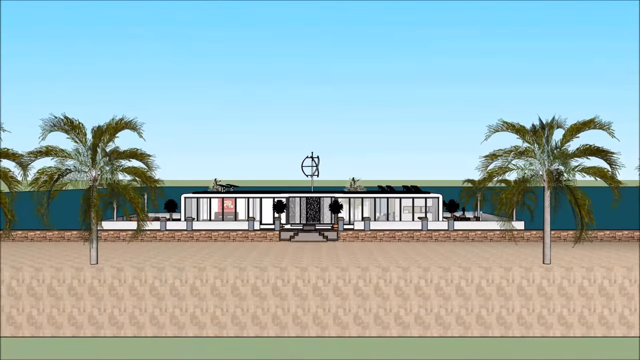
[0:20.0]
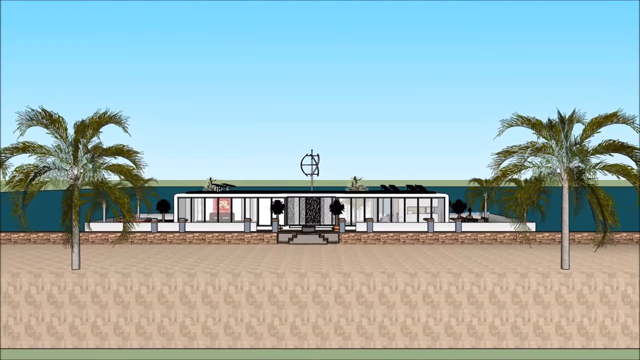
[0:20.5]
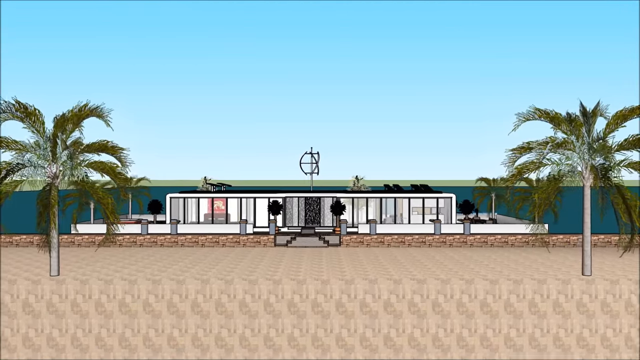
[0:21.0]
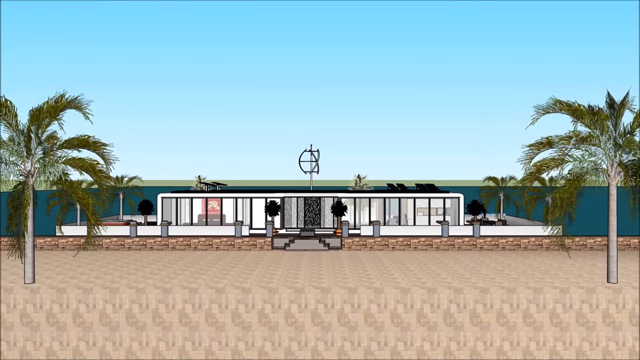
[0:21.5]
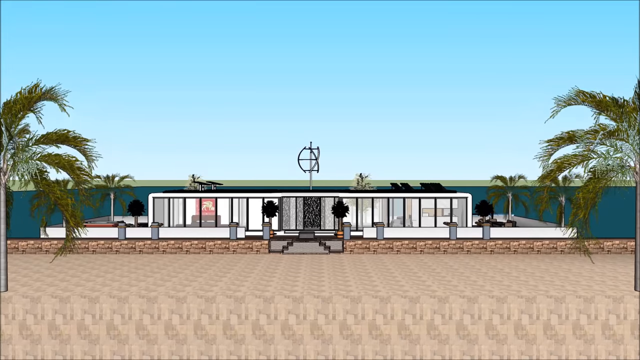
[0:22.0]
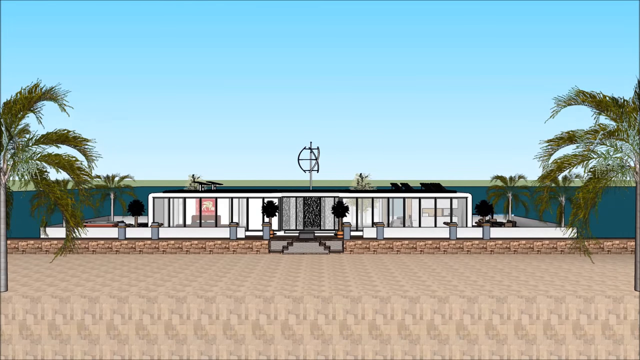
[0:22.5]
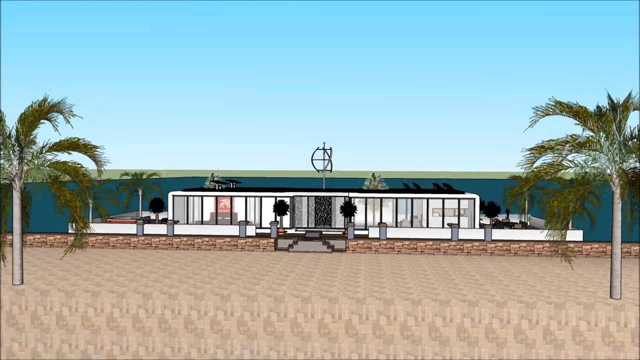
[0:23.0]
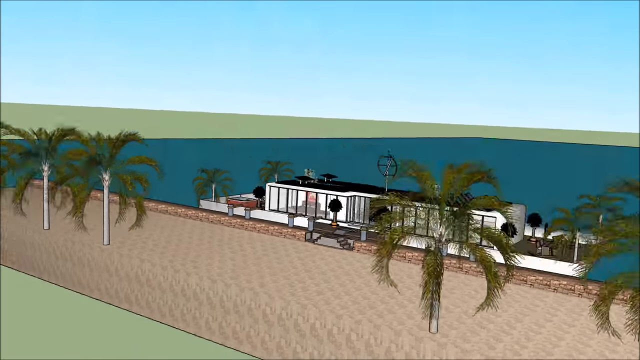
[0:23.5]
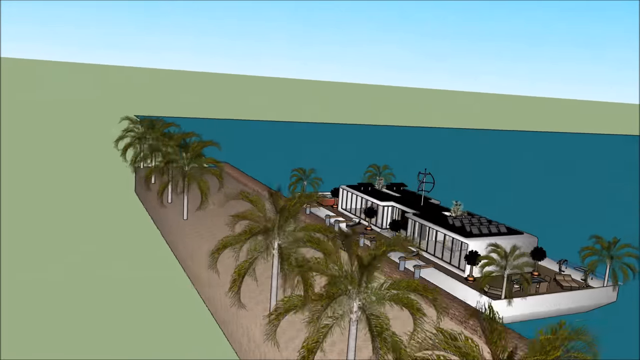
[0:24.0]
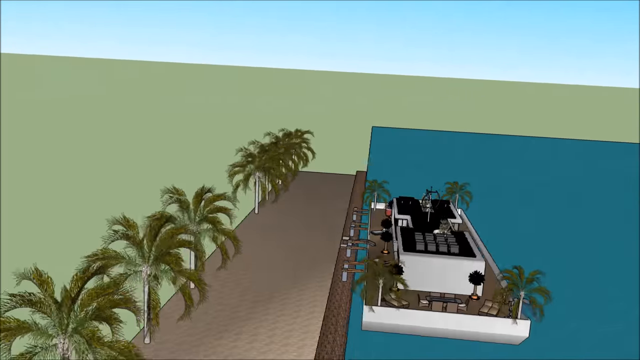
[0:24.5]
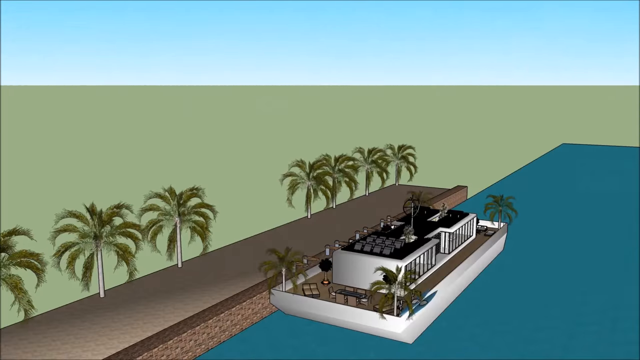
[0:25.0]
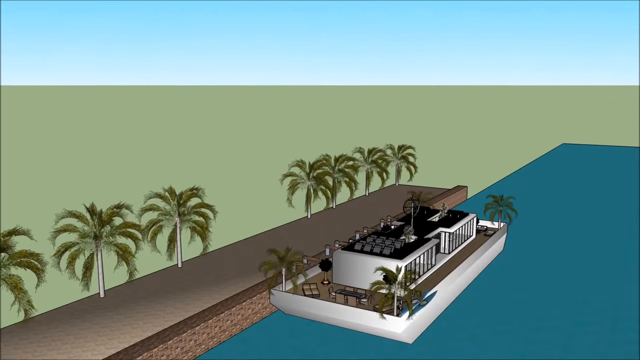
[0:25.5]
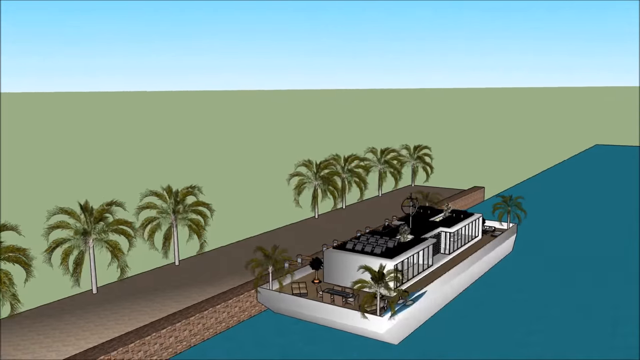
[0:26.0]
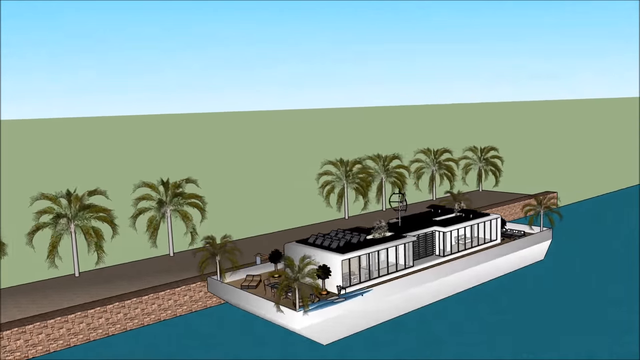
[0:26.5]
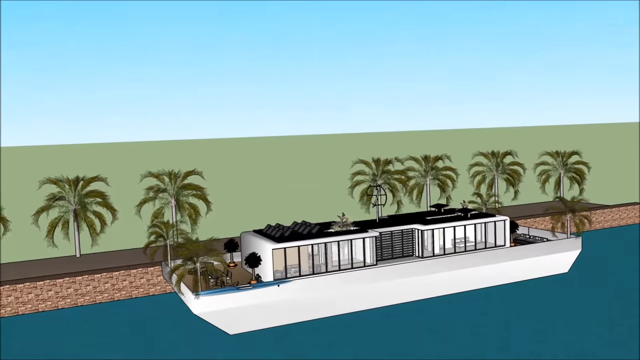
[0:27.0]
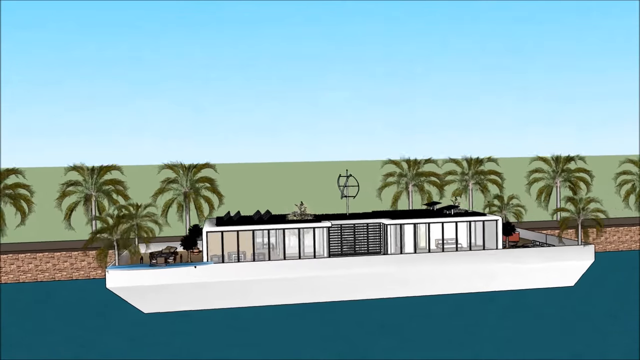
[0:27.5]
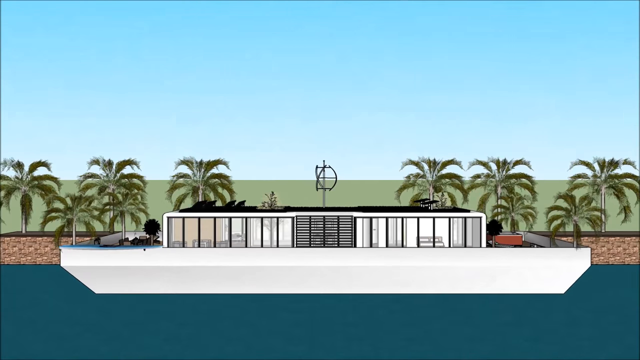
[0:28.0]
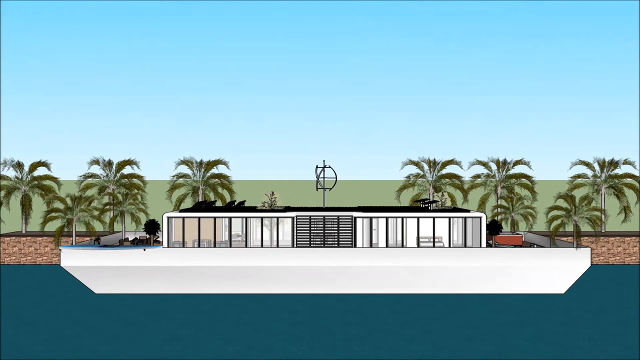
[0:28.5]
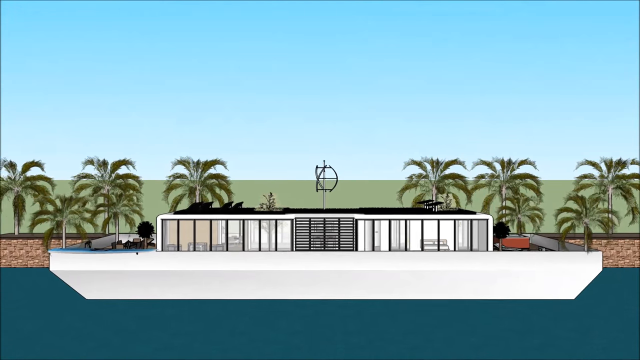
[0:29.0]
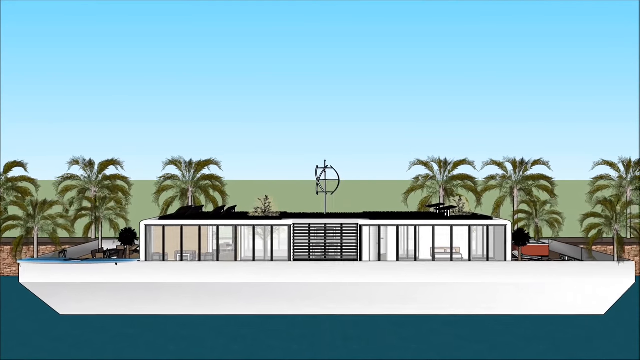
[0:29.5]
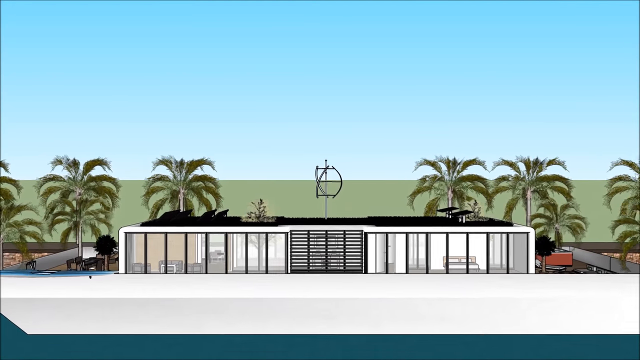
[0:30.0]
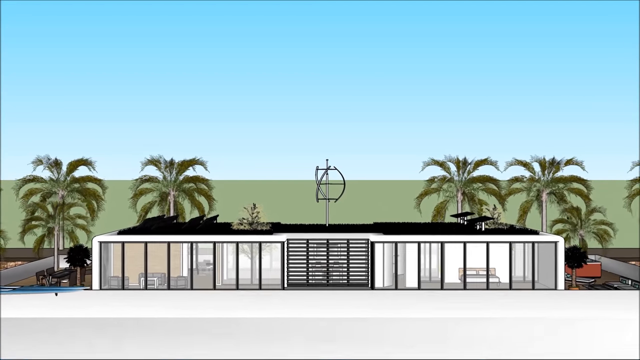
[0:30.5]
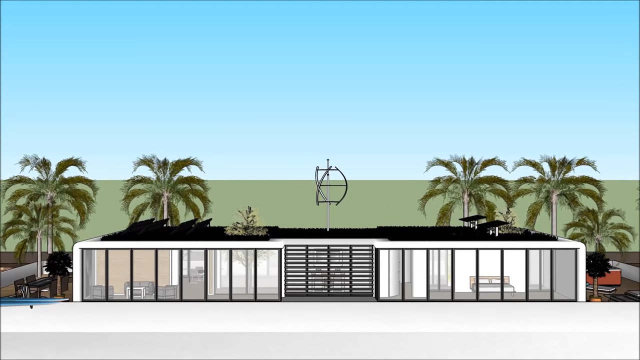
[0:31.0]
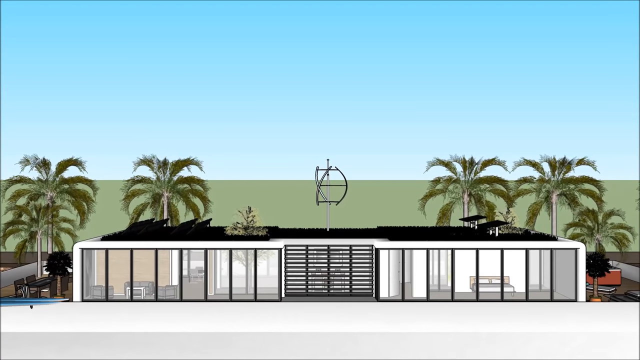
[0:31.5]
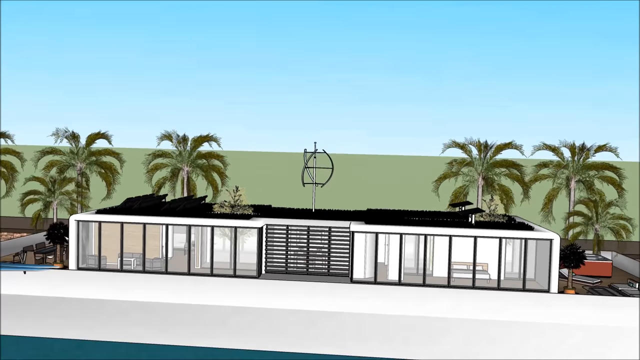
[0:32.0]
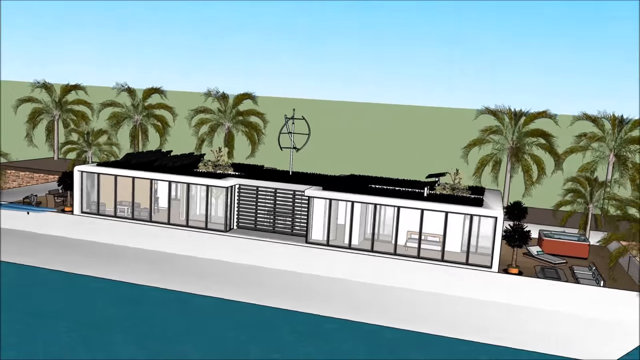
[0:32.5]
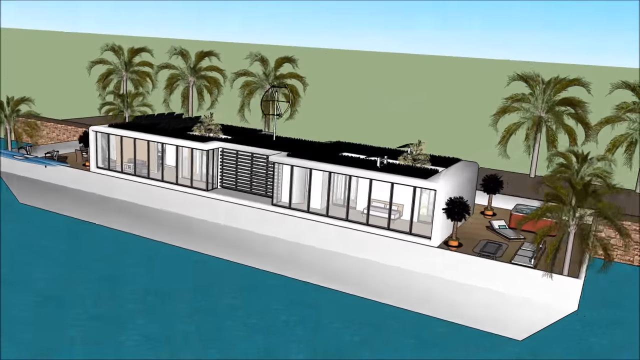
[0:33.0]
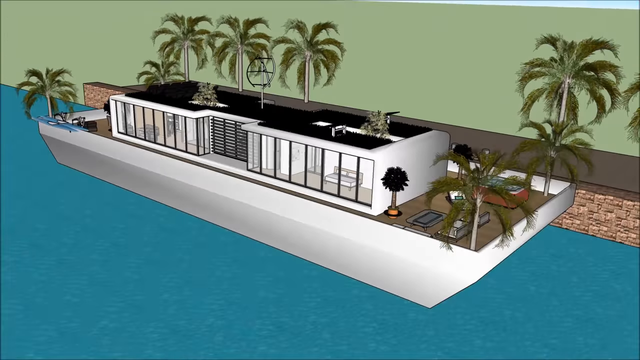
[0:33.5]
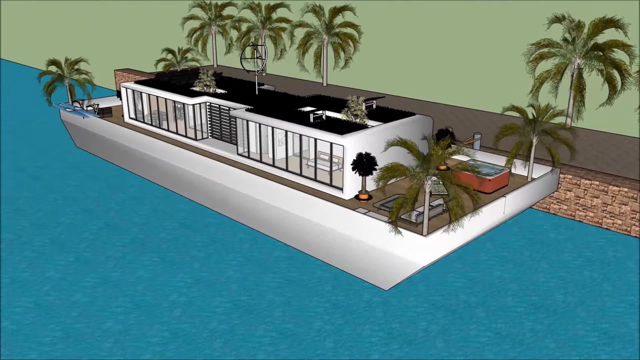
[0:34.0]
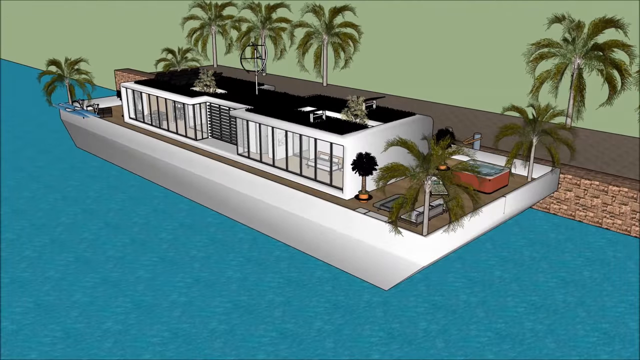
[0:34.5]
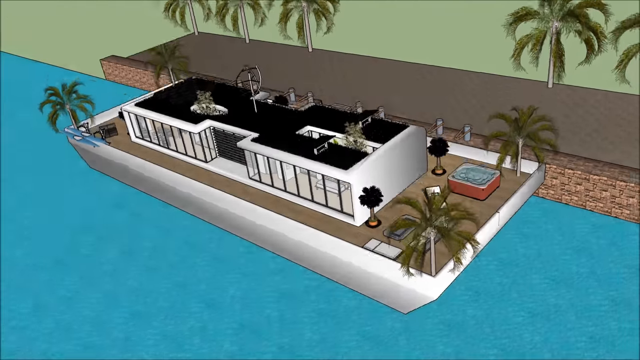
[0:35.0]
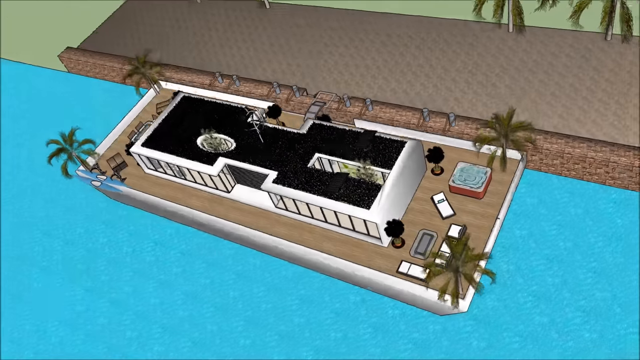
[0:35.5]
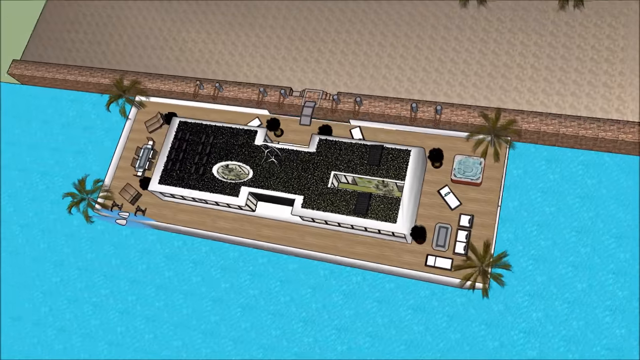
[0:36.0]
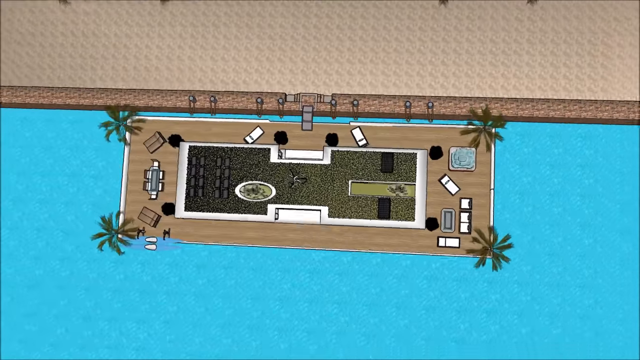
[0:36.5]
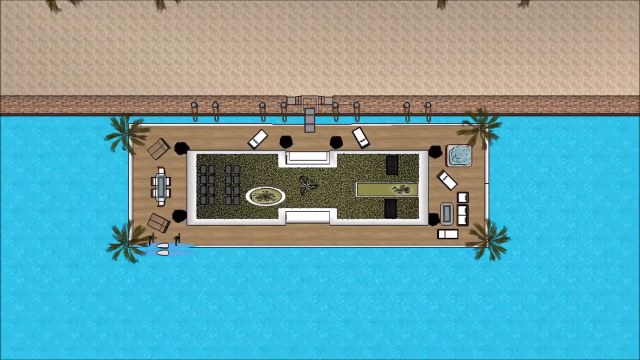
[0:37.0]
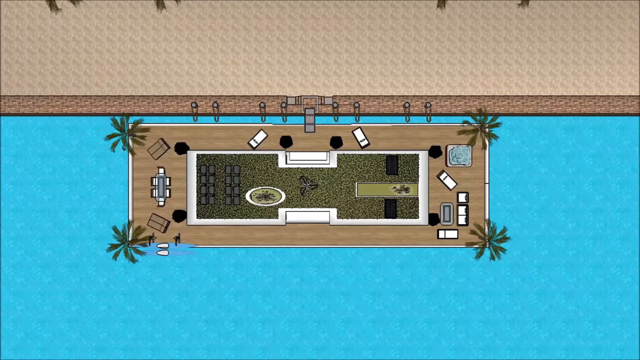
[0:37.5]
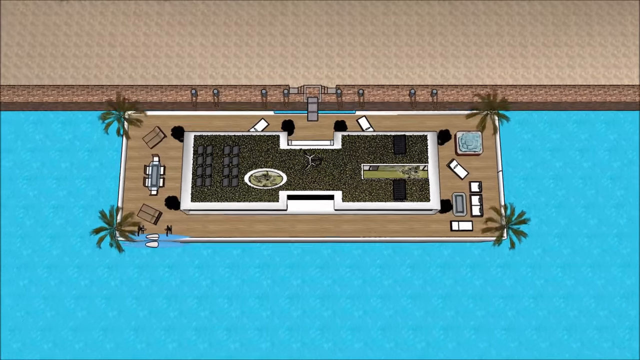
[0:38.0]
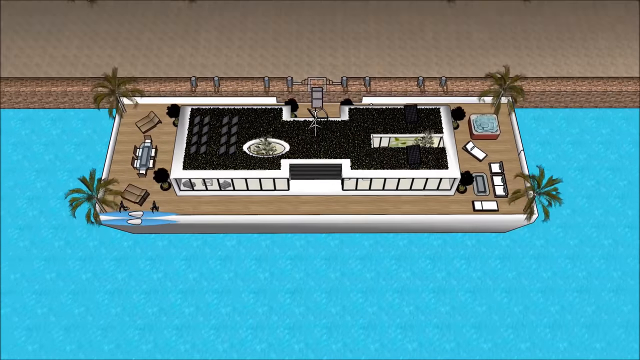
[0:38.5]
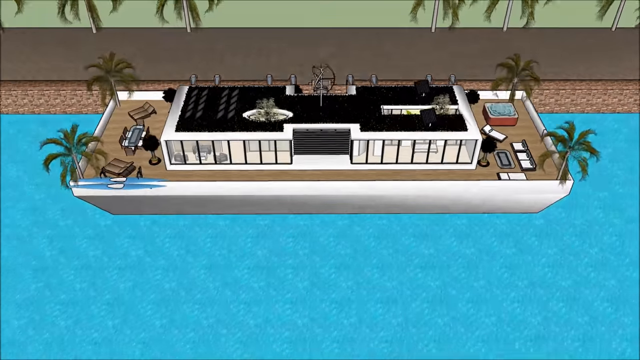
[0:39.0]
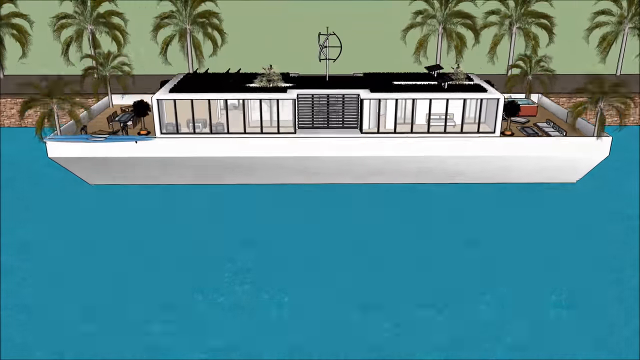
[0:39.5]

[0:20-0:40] A bright blue sky appears with a few palm trees on the left and right, and a white building with multiple layers of glass. The camera slowly zooms in, does a spin and goes toward the side, stops, then continues toward the other side. There seem to be little black bars, kind of for privacy. It zooms in a bit, showing something sticking out from the roof. It then moves to the other side, showing a little jacuzzi or pool, something like a spa, and an area to relax. It hovers over it, revealing a very large body of water, then moves down again, going through the different angles of the property, which kind of looks like a beach house.